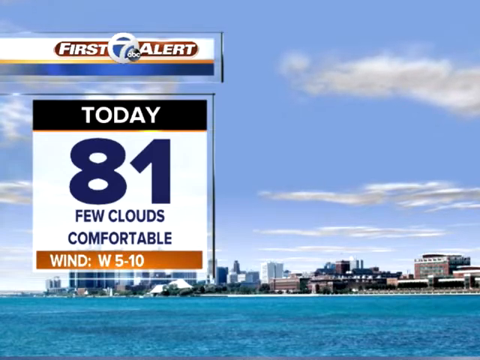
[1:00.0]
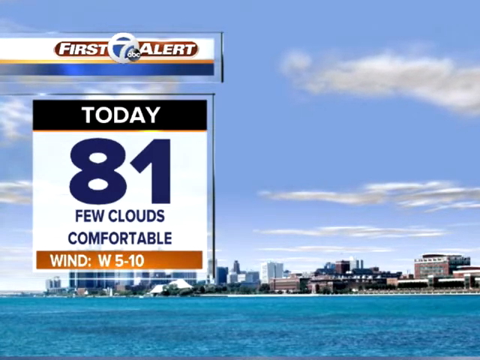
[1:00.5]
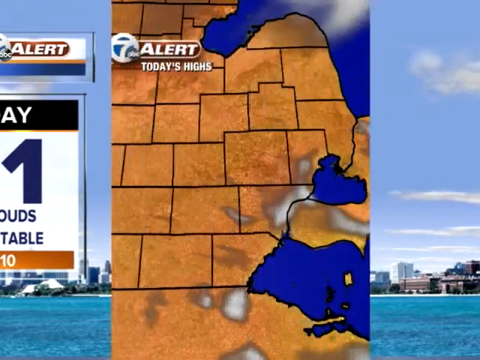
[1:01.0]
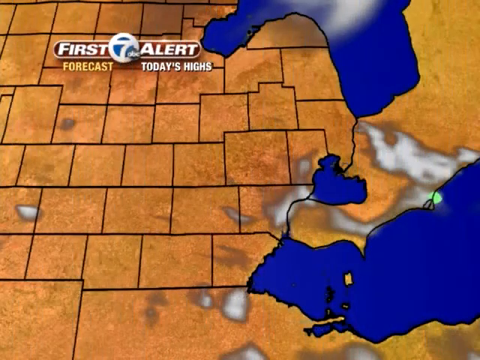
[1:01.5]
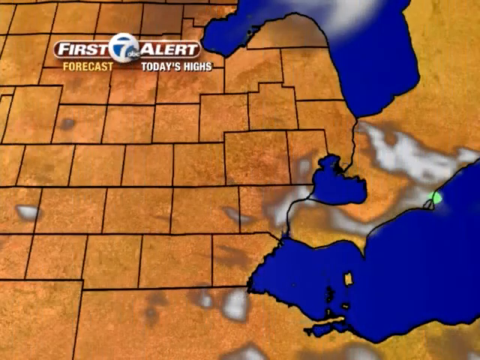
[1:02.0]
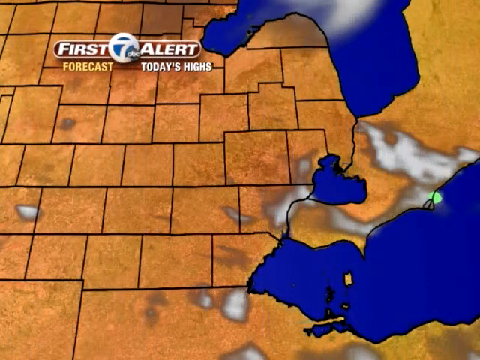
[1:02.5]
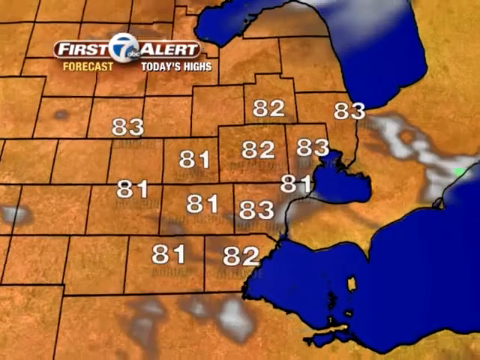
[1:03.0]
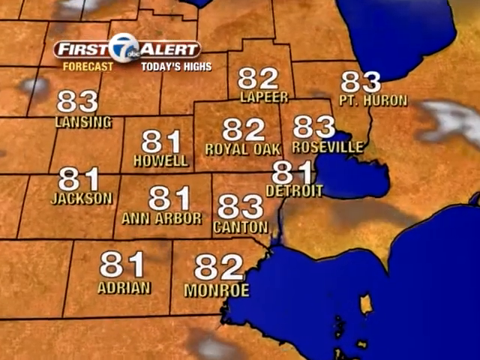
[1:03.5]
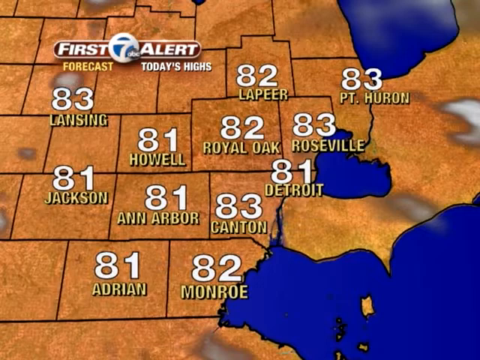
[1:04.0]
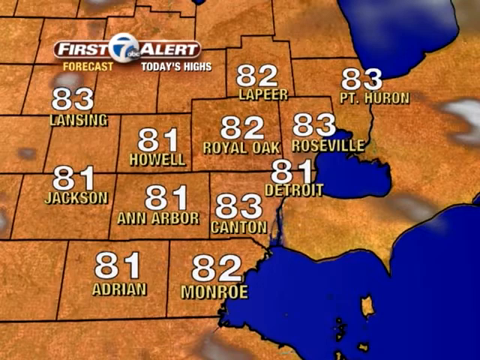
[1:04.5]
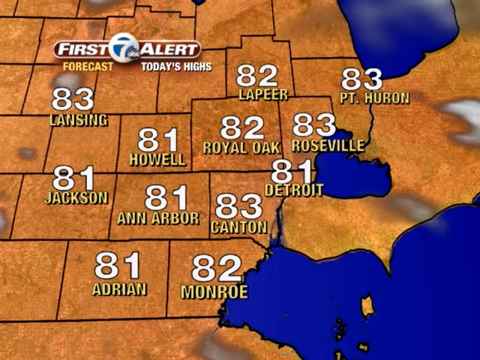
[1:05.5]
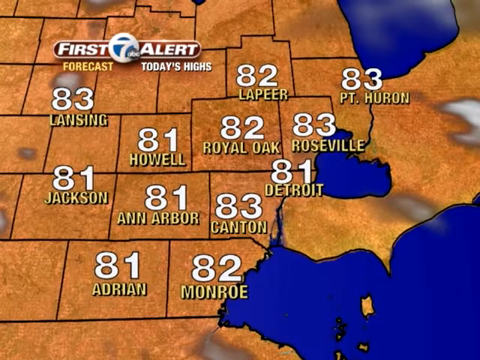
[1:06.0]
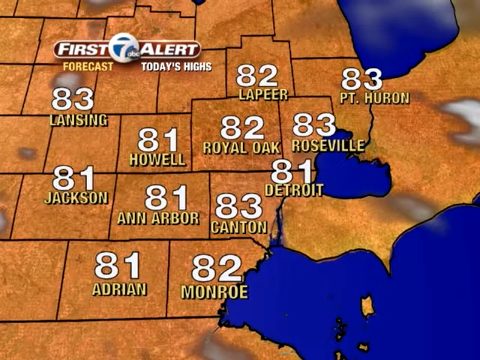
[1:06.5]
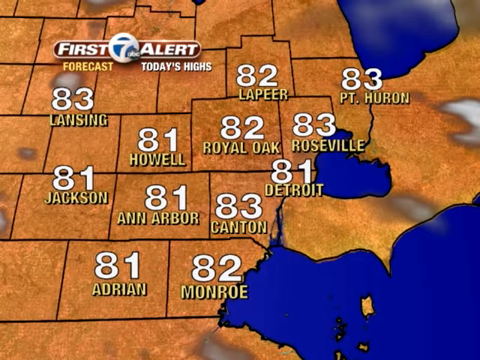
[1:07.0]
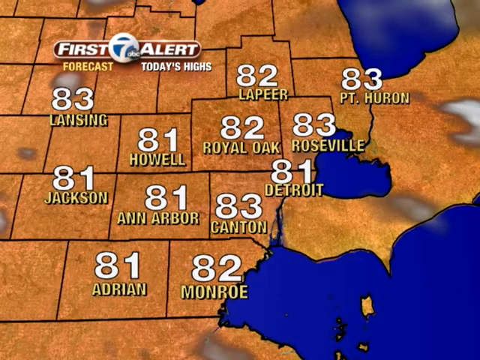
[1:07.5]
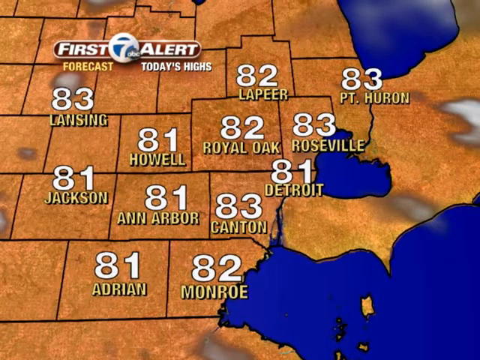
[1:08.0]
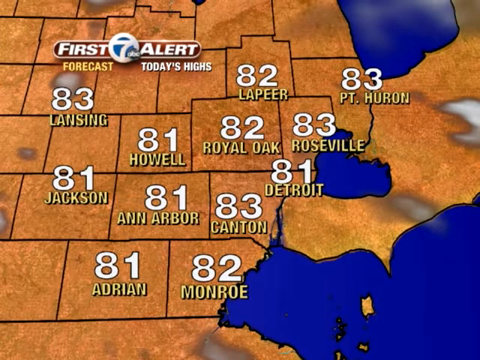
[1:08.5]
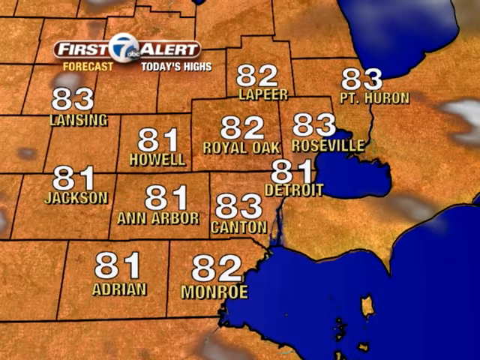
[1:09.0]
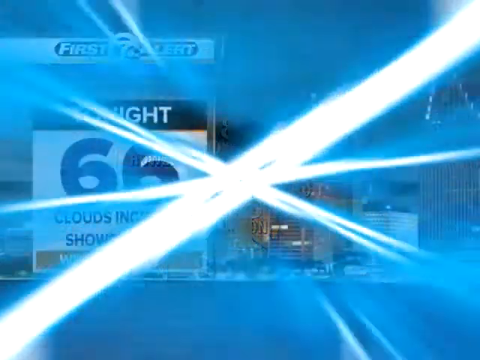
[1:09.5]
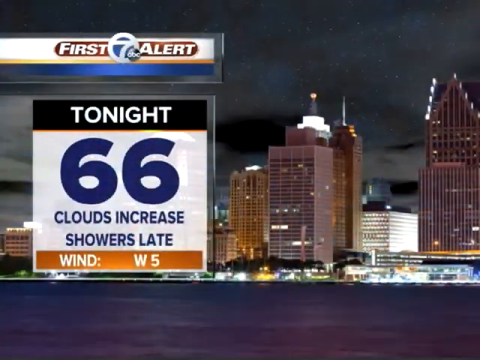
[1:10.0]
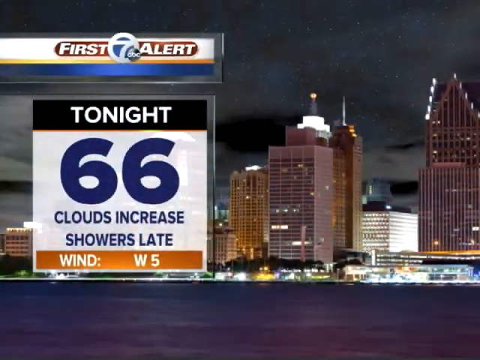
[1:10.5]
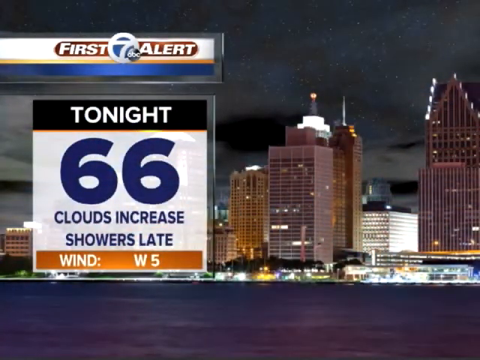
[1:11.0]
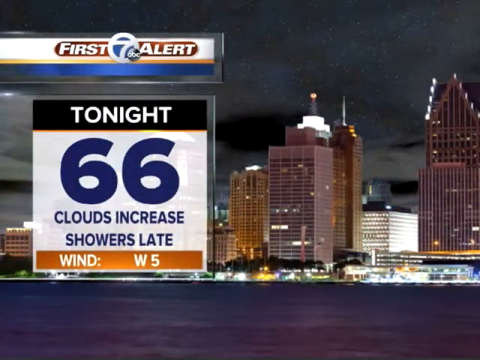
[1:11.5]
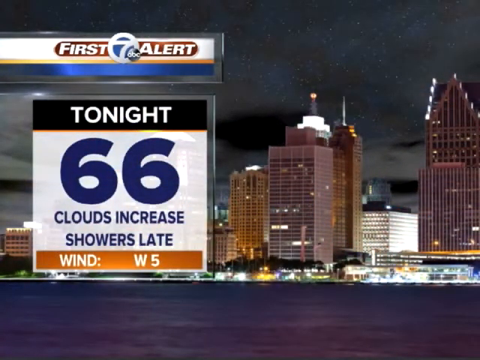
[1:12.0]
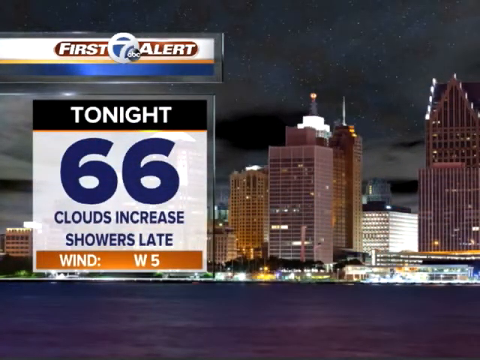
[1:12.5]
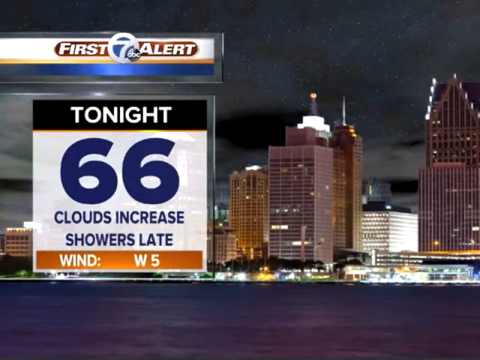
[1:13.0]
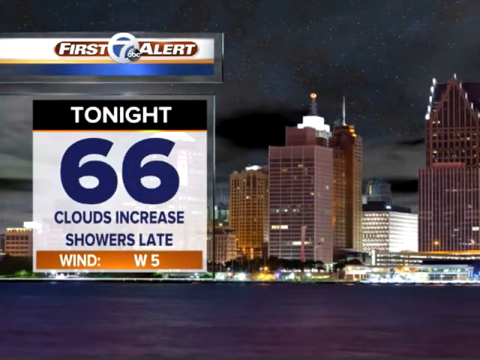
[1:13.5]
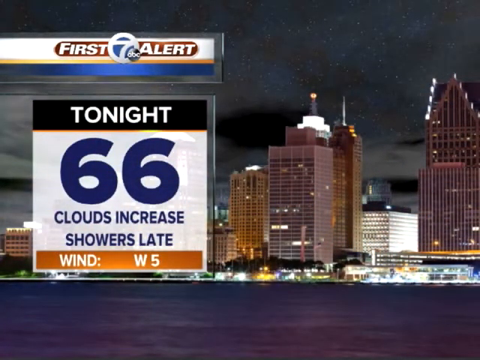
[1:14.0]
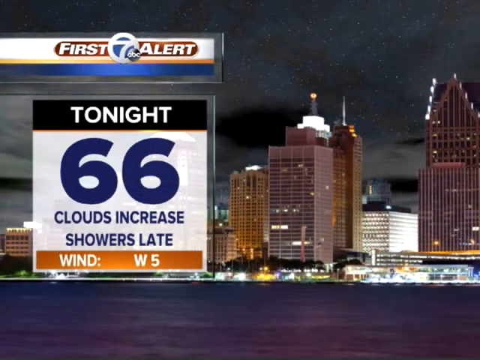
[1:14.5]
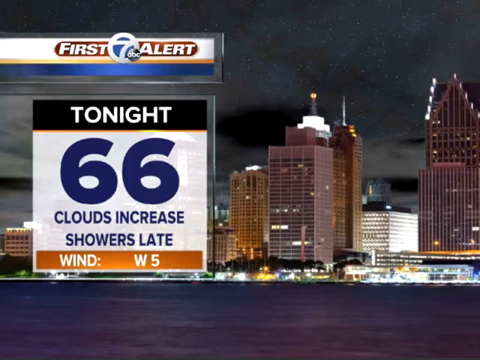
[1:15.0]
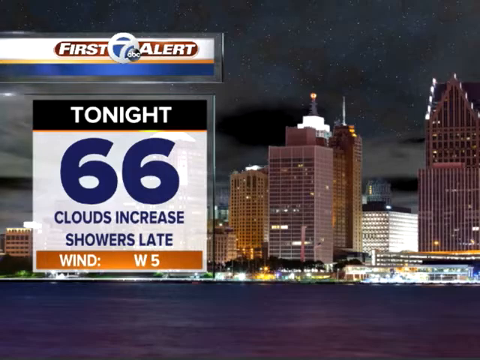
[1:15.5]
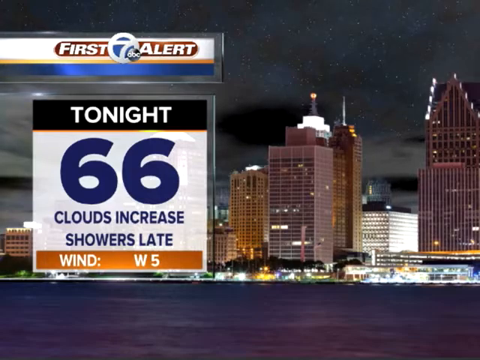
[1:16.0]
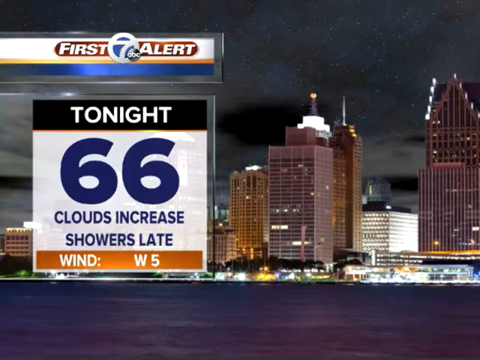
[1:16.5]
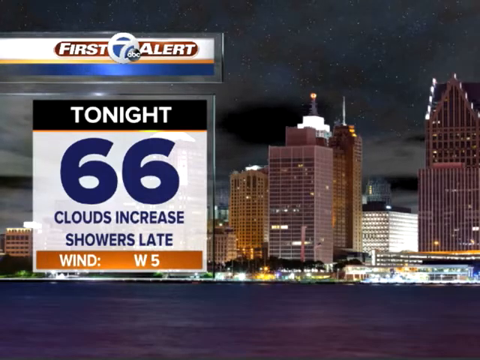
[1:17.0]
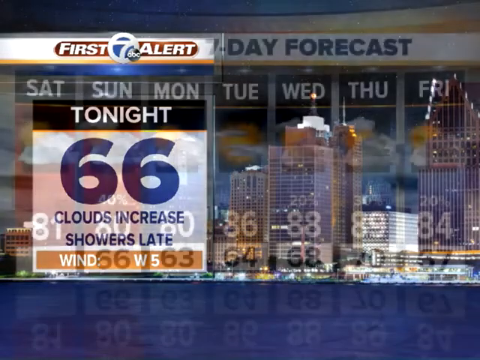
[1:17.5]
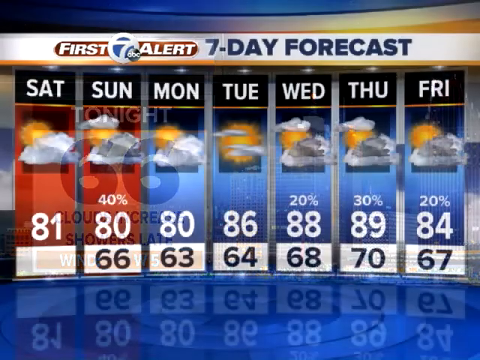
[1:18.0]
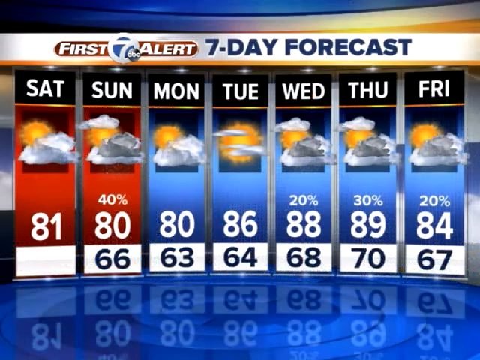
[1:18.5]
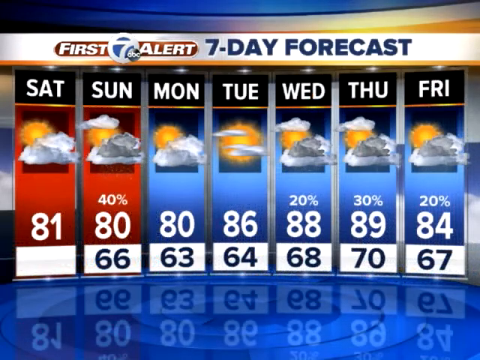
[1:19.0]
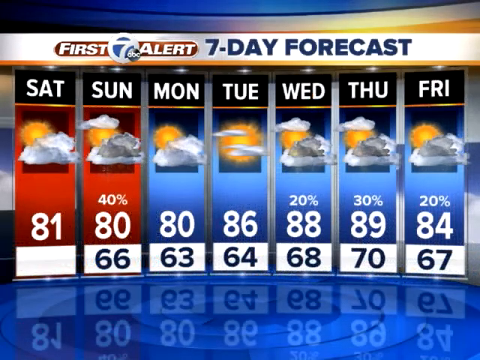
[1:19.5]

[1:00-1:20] A graphic has a header in the top left reading "first alert" with a logo showing the number seven with ABC on it. Underneath it says "today", with the temperature "81" in blue text and "few clouds comfortable". Below that, white text reads "wind" and "w5-10". In the background is a cityscape with a body of water in front of it. The video cuts to a kind of orange map with black borders, showing the Great Lakes in blue. Yellow text marks cities including Ann Arbor, Monroe, Lansing, and Jackson, and above them white digits show the temperature of each town. It then cuts to another graphic that also says "first alert" with the ABC logo; underneath, white text reads "tonight" with a temperature of 66 degrees, and below that it says "clouds increase showers late". In the background is a cityscape that looks like it is at night.